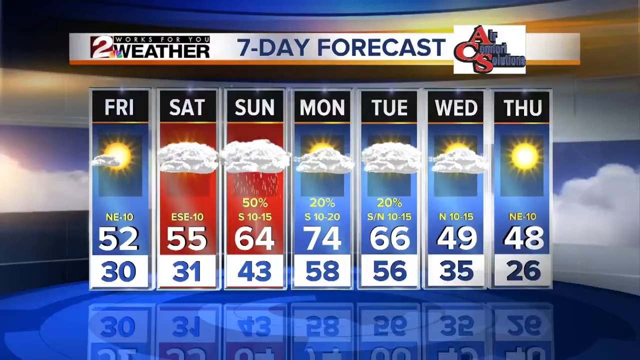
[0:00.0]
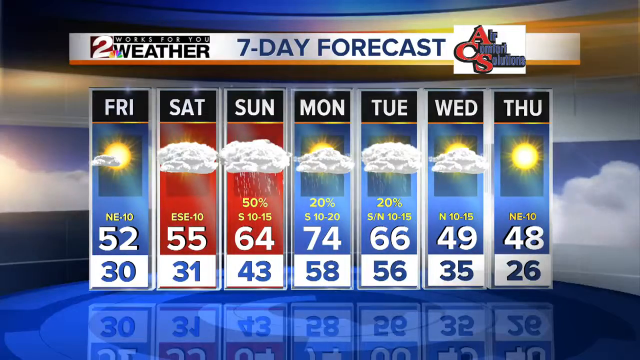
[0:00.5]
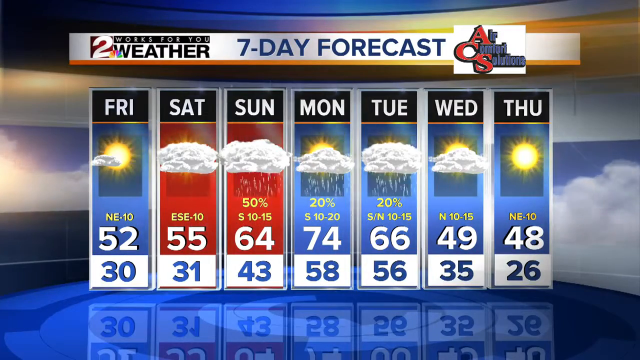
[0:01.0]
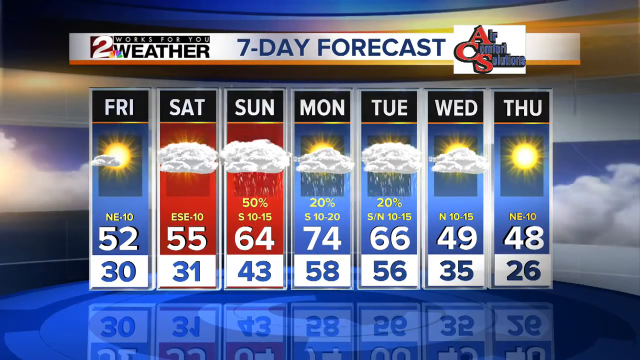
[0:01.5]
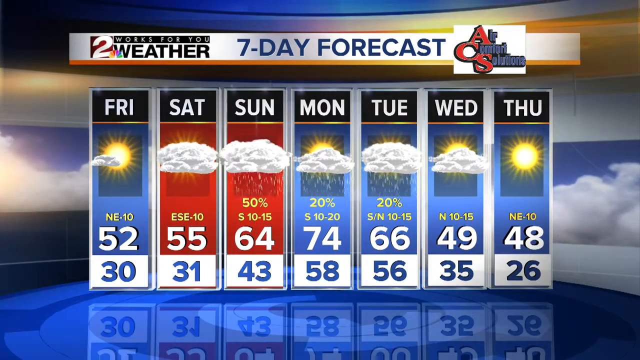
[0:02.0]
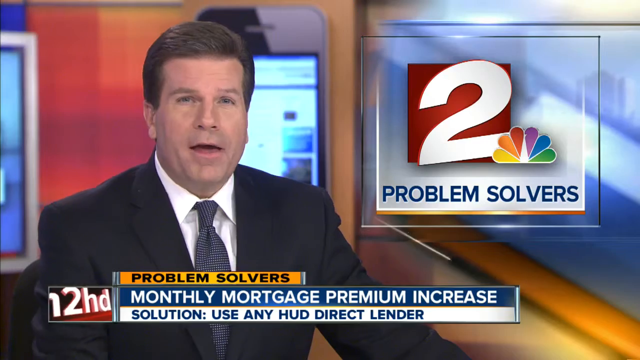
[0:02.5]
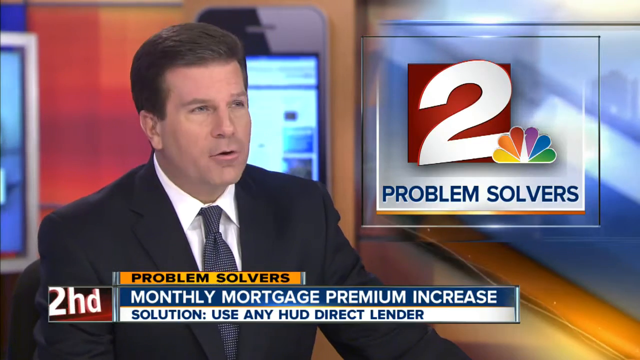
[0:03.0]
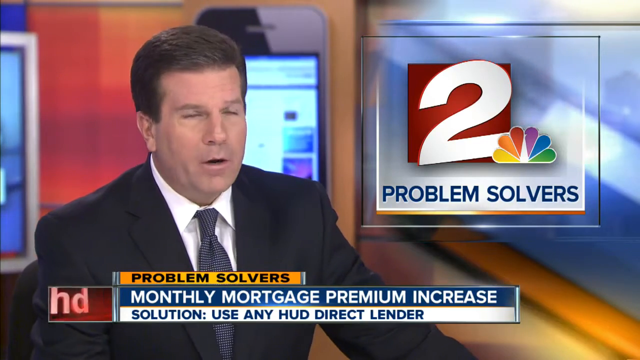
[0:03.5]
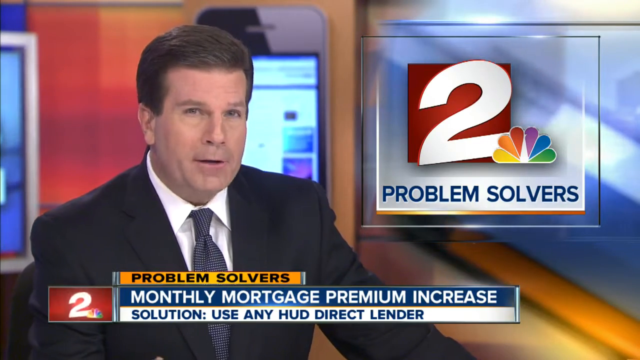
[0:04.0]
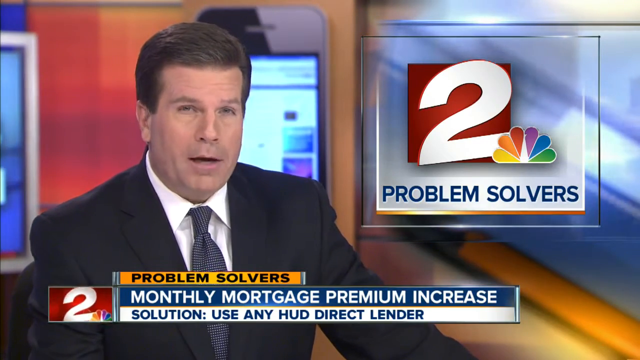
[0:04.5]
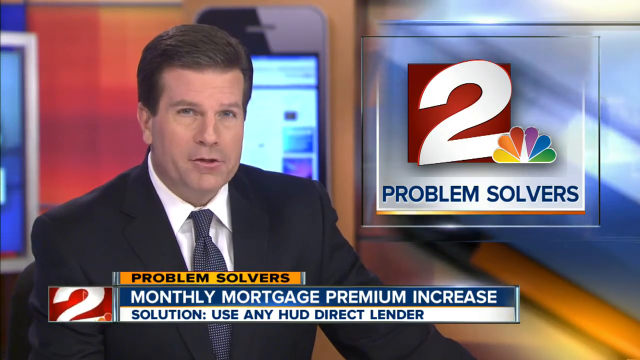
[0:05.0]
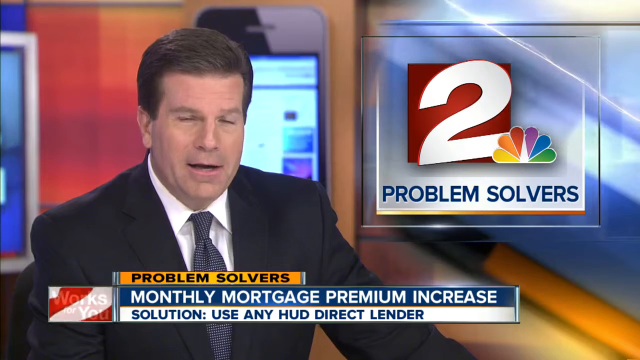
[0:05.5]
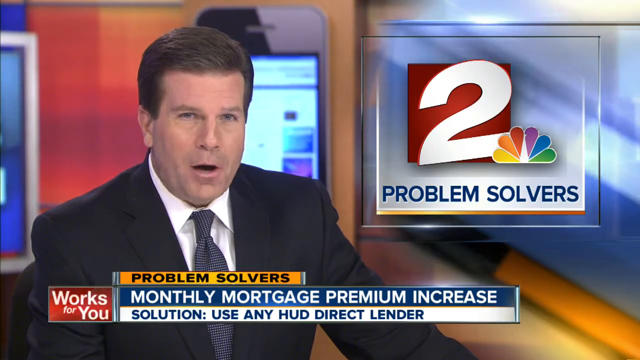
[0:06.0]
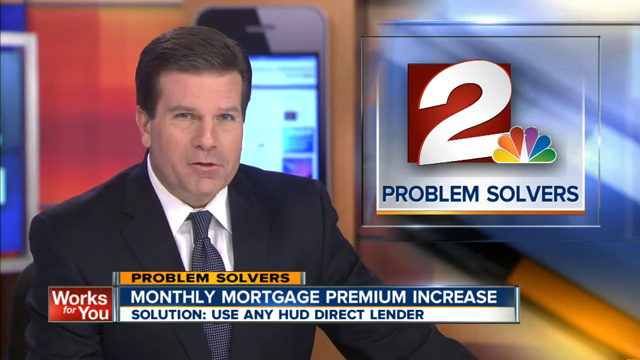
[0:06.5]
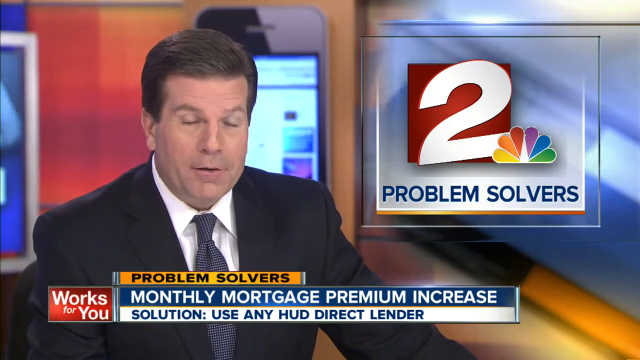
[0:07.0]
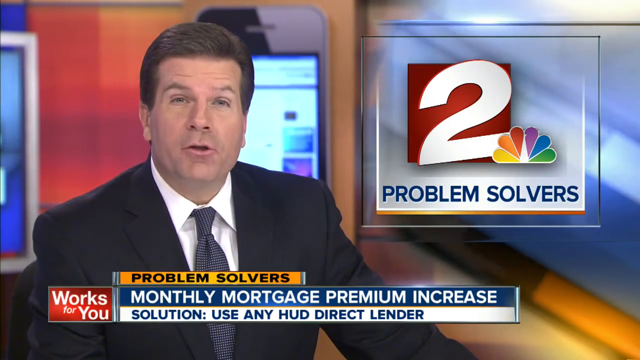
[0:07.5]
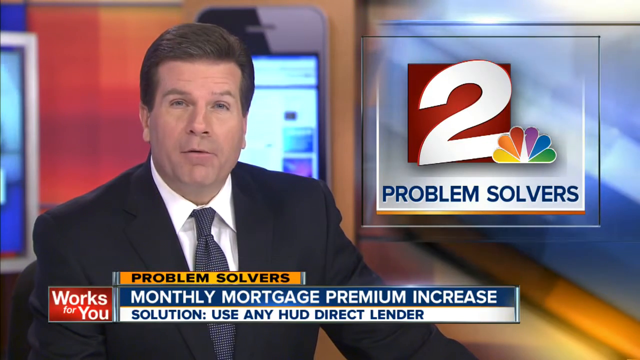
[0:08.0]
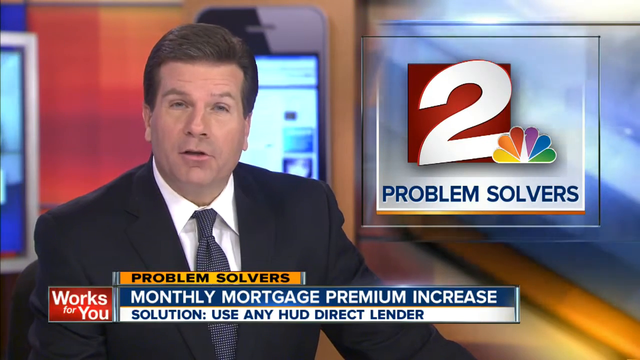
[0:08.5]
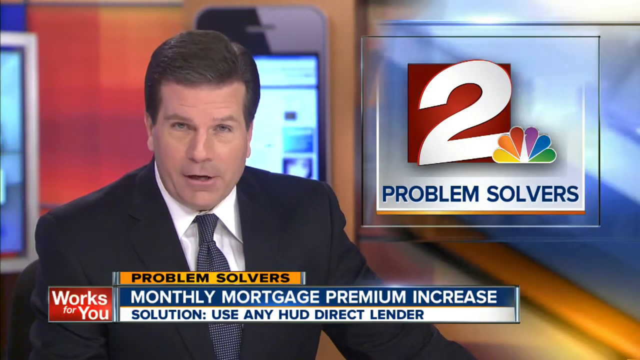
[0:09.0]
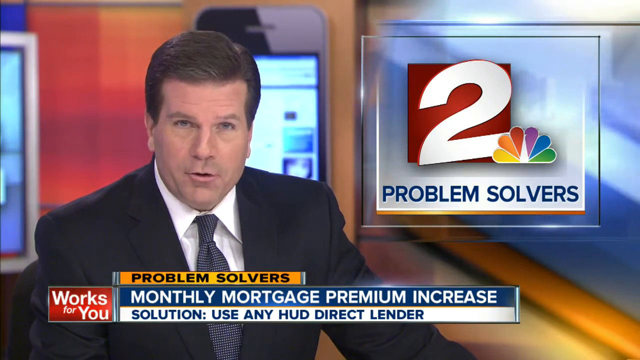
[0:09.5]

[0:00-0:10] The video opens on a news broadcast from a channel called 2, showing a seven-day forecast for Friday, Saturday, Sunday, Monday, Tuesday, Wednesday and Thursday. Friday and Saturday are in the 50s, and Saturday and Sunday are expected to be cloudy. On Sunday the temperatures increase to 64 and above, but on Wednesday the temperature drops to 49 degrees, and on Thursday to 48 degrees. The broadcast then shows a male news anchor in a black suit and a tie, in a segment about a monthly mortgage premium increase that presents a solution: use any HUD direct lender. On the right side of the screen is the channel's logo, and underneath it is the segment title, "Problem Solvers."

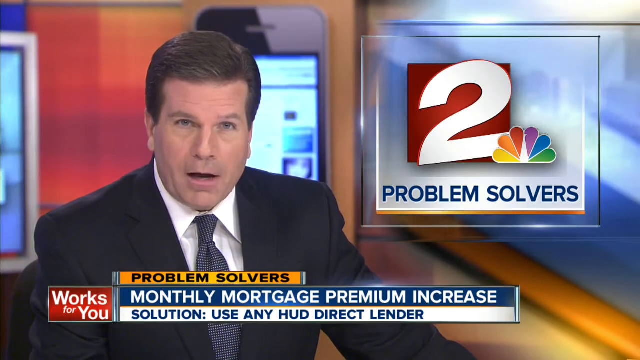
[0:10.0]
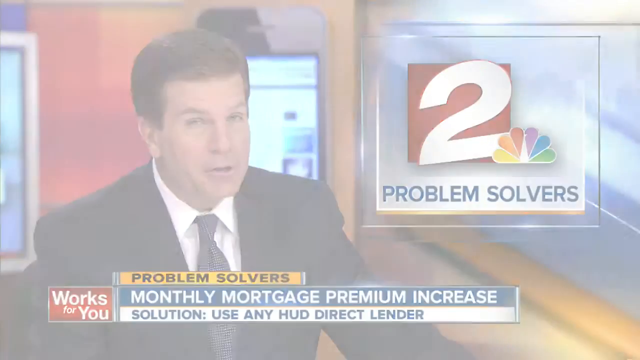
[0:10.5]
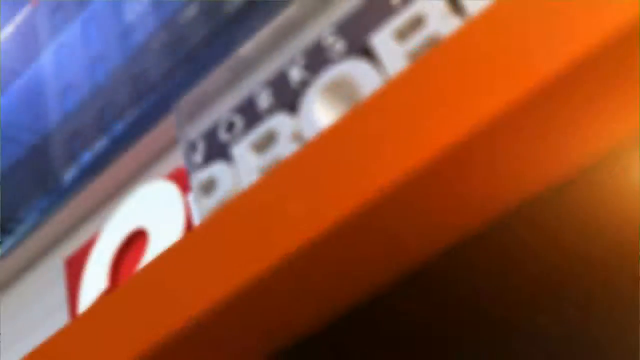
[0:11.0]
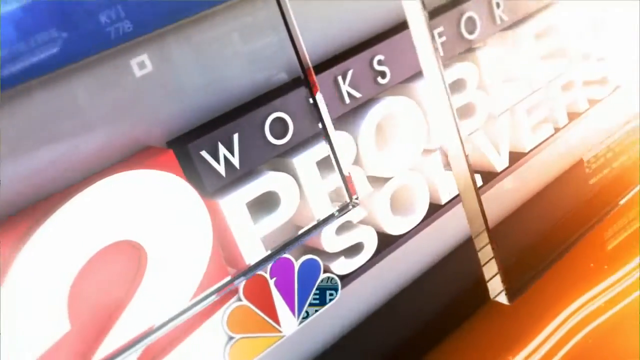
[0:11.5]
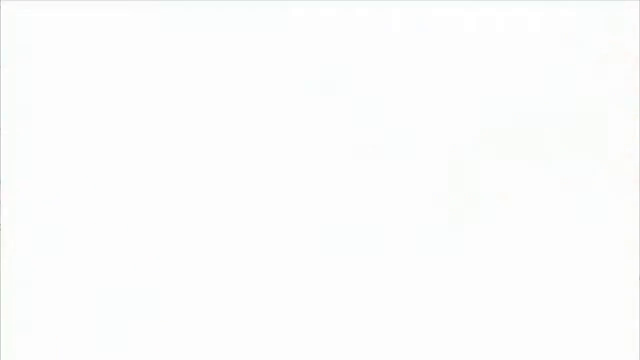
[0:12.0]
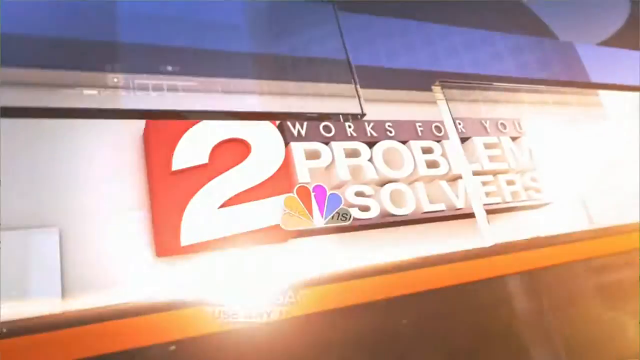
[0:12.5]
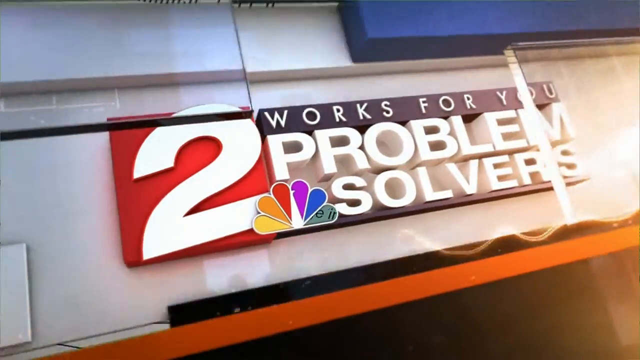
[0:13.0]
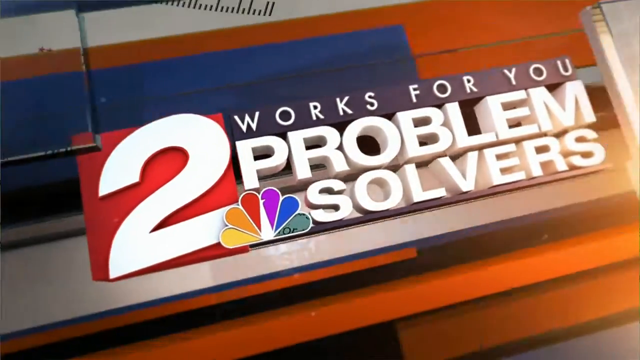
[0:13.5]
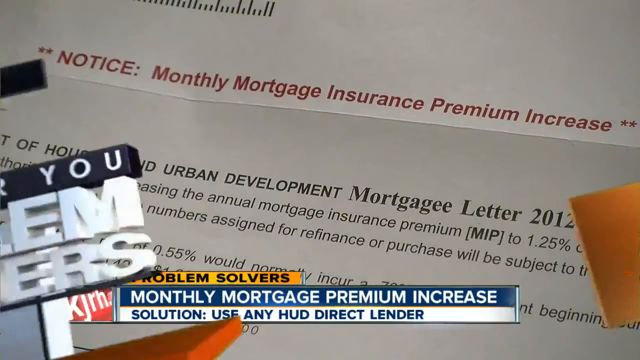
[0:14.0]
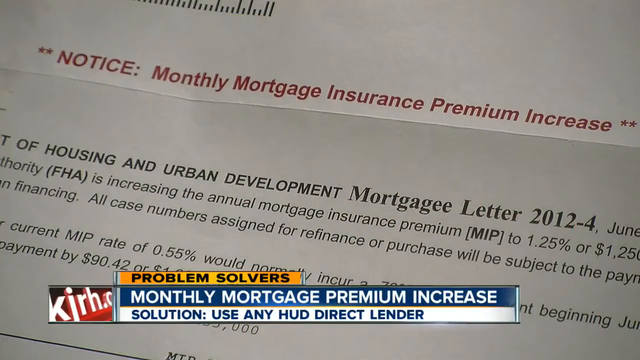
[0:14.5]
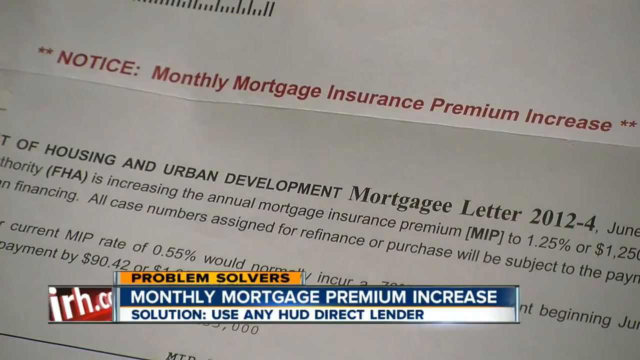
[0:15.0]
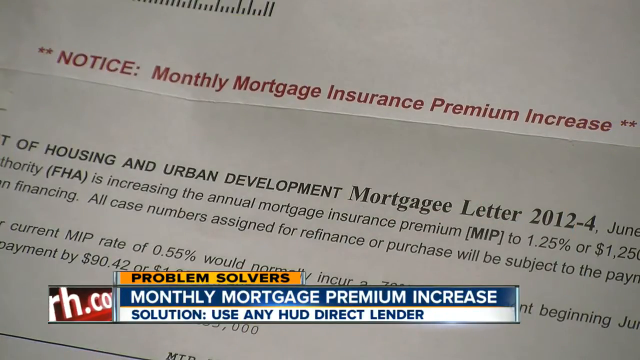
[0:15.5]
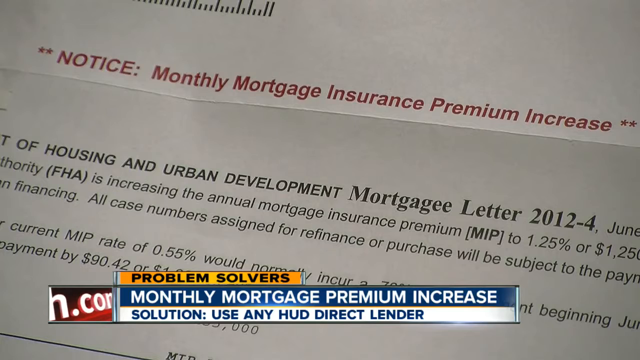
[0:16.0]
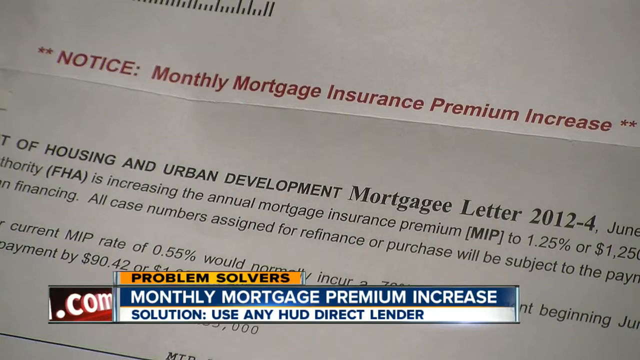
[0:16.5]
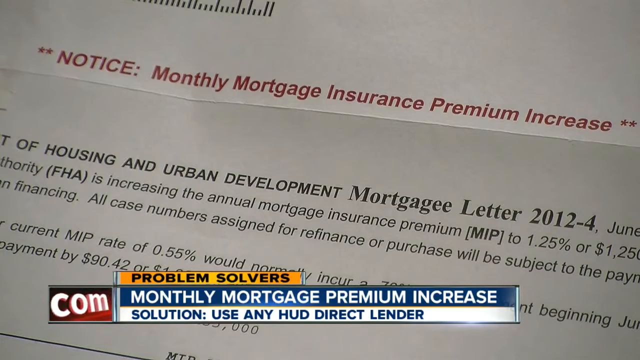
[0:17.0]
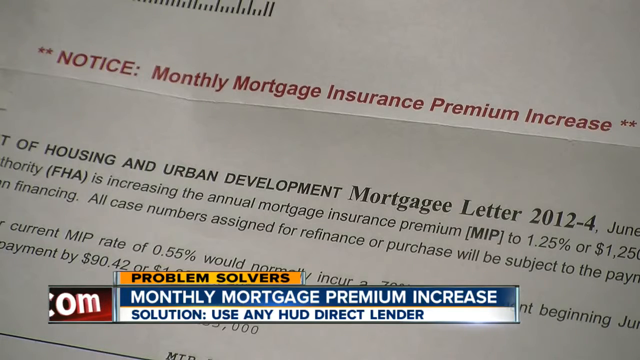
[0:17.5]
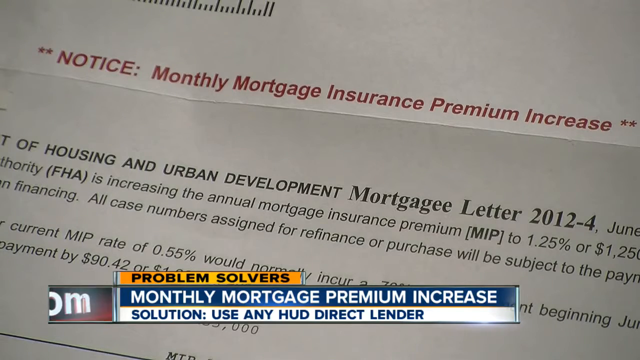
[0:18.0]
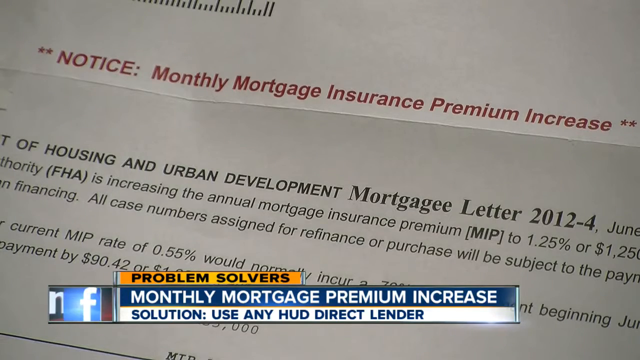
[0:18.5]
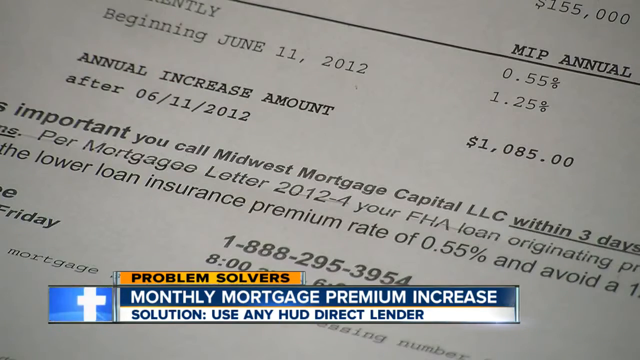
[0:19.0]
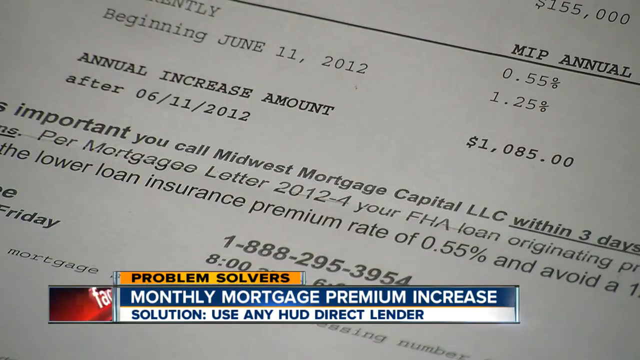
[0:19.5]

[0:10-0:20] A news broadcast from a channel called two shows its logo, the number two, on the right side of the screen, with the segment title "Problem Solvers" underneath. A white male news anchor wears a black suit, a tie and a white button-down shirt. In front of him on the screen is a bar that says "monthly mortgage premium increase." He seems to be addressing the monthly mortgage premium increase, with the solution being to use any HUD direct lender. The broadcast shows a notice of a monthly mortgage insurance premium increase that was given to someone.